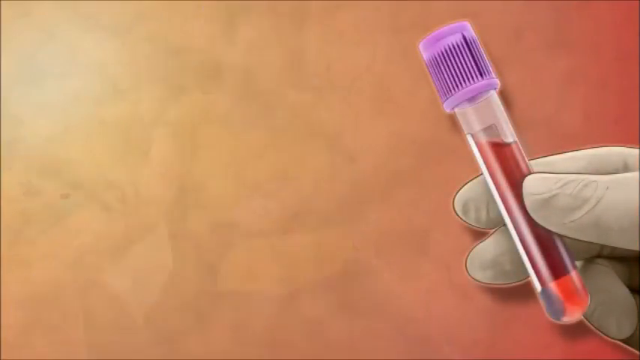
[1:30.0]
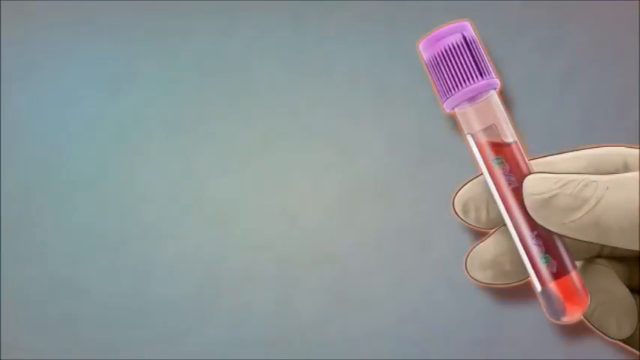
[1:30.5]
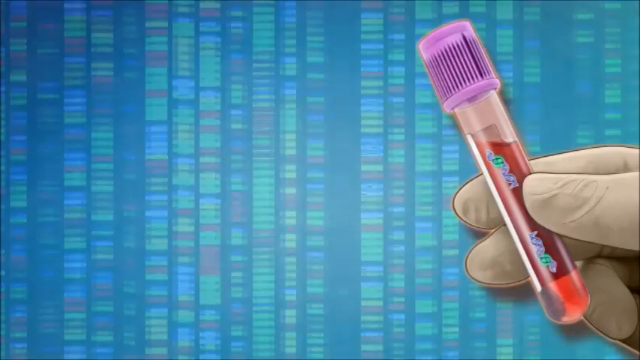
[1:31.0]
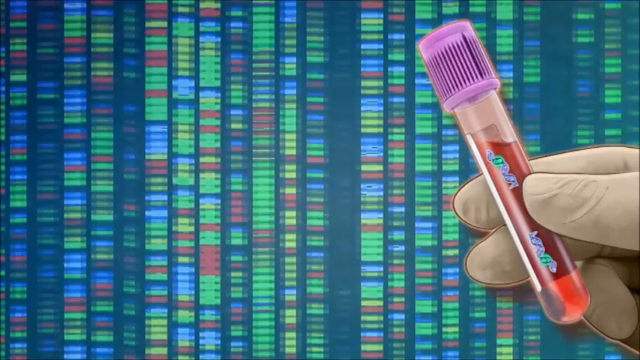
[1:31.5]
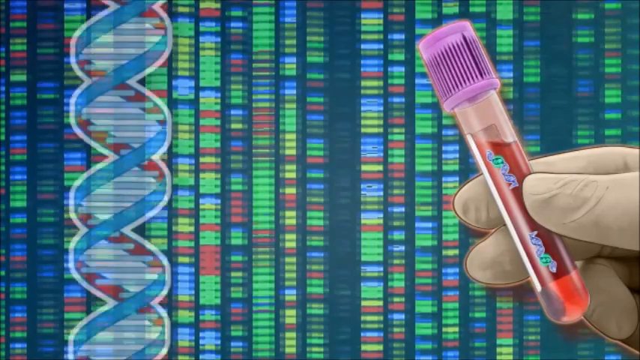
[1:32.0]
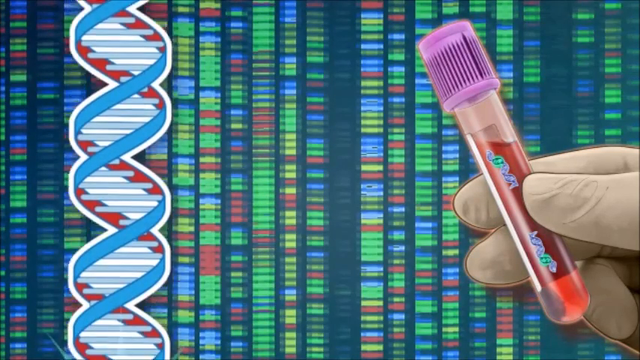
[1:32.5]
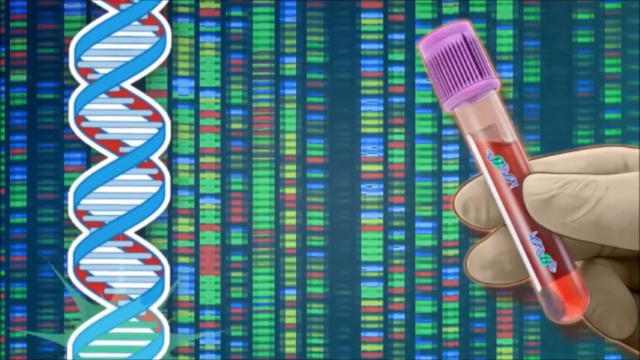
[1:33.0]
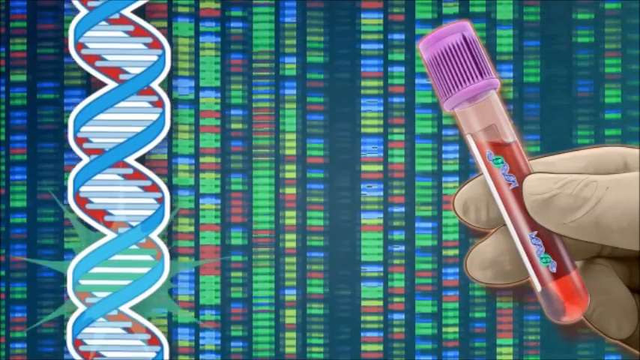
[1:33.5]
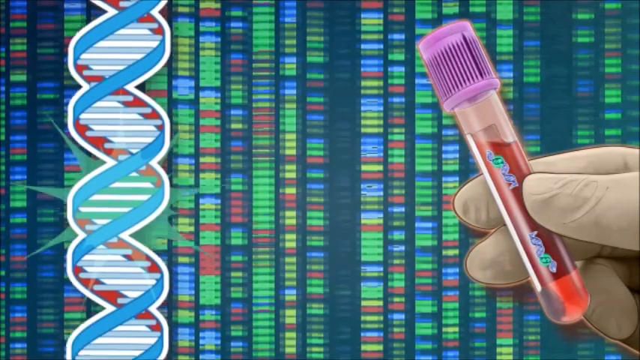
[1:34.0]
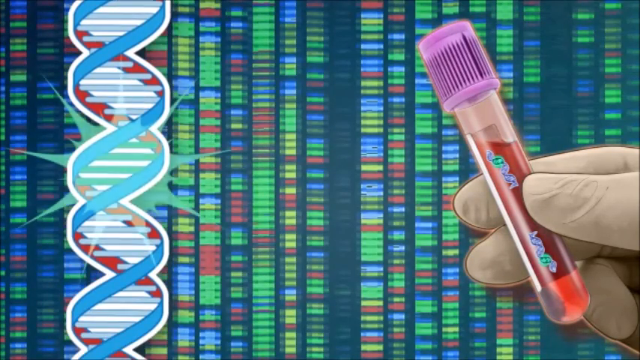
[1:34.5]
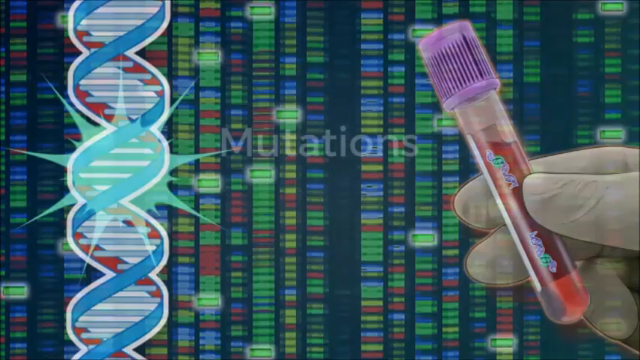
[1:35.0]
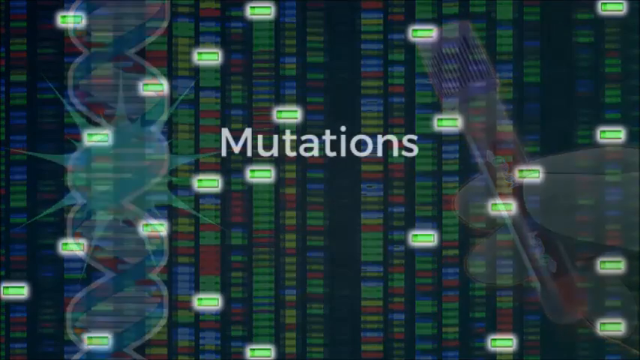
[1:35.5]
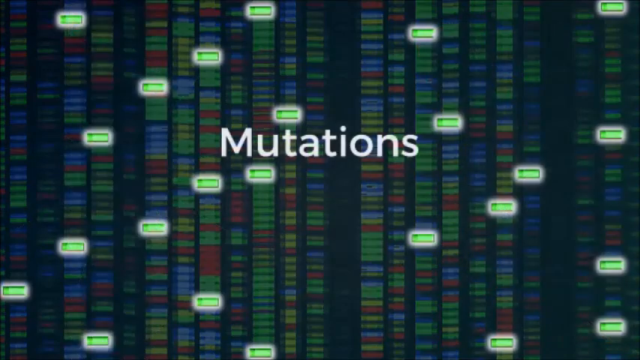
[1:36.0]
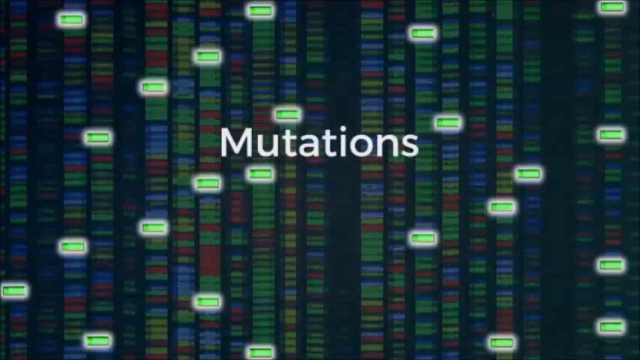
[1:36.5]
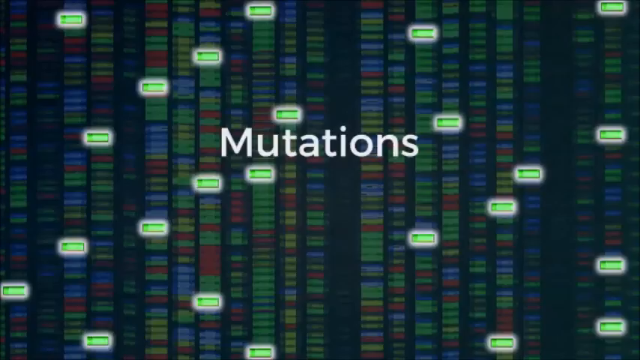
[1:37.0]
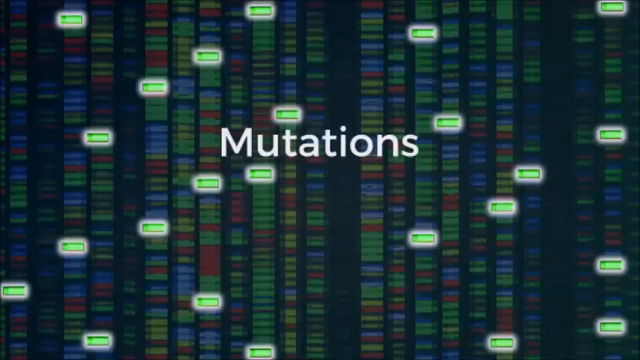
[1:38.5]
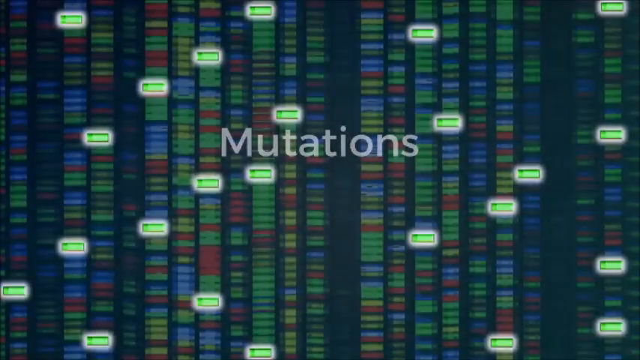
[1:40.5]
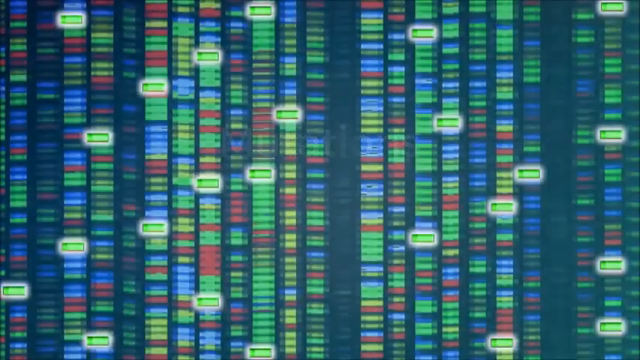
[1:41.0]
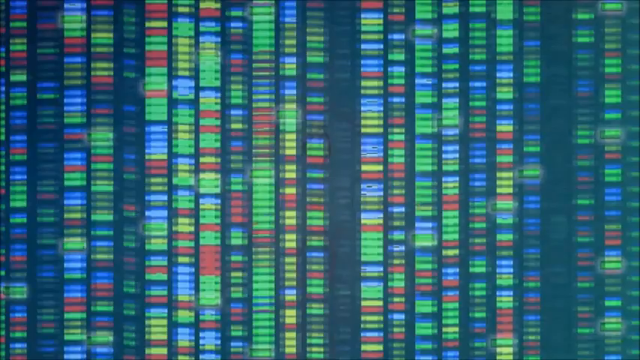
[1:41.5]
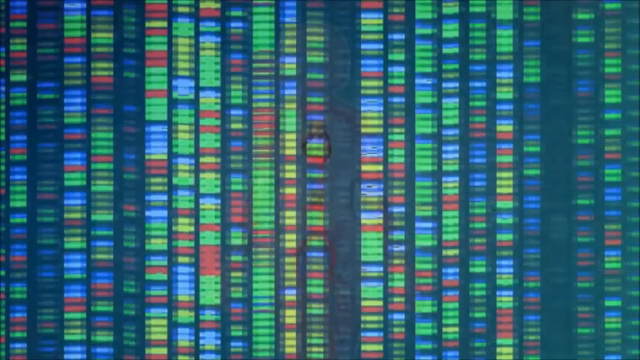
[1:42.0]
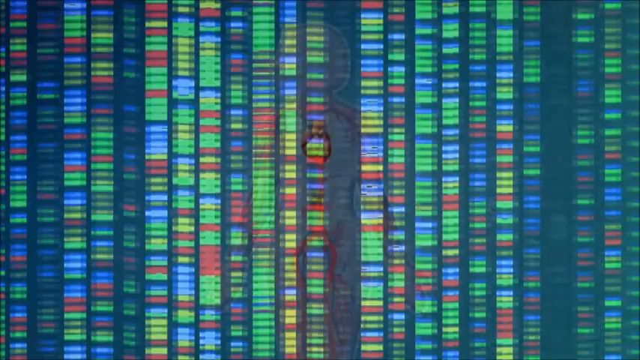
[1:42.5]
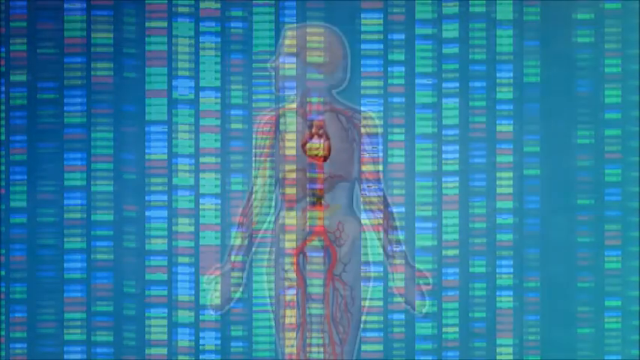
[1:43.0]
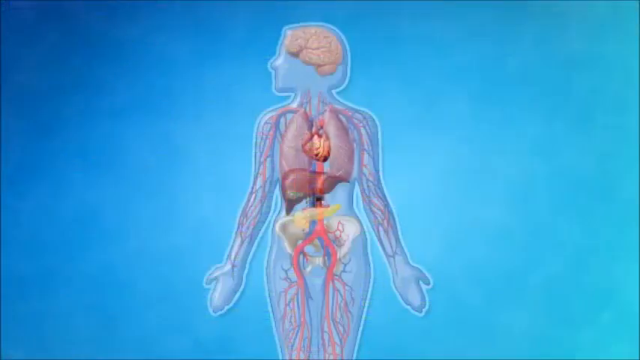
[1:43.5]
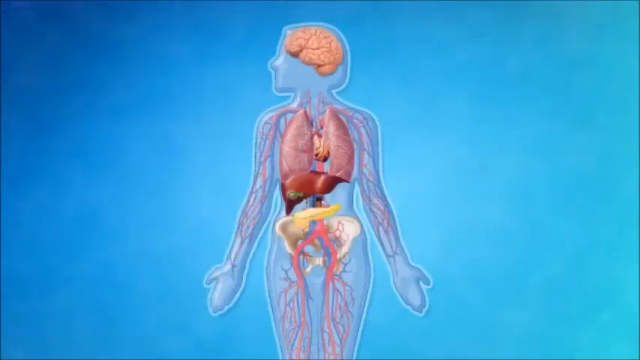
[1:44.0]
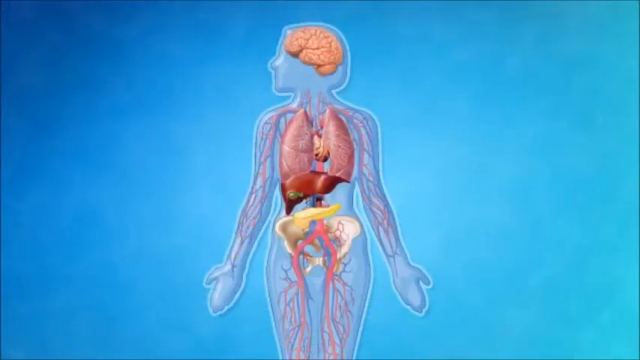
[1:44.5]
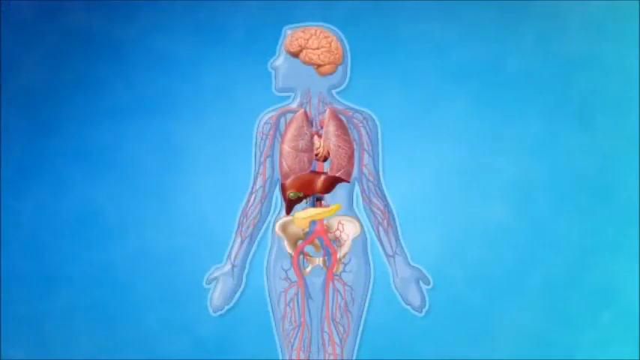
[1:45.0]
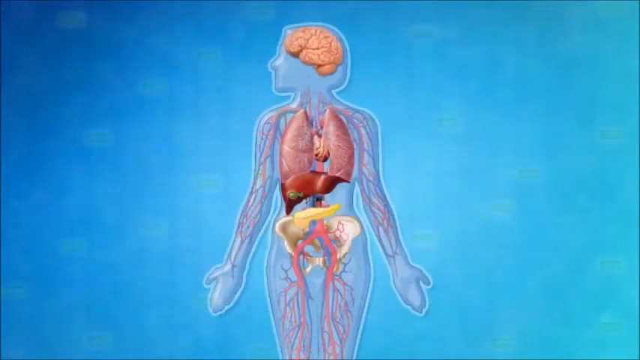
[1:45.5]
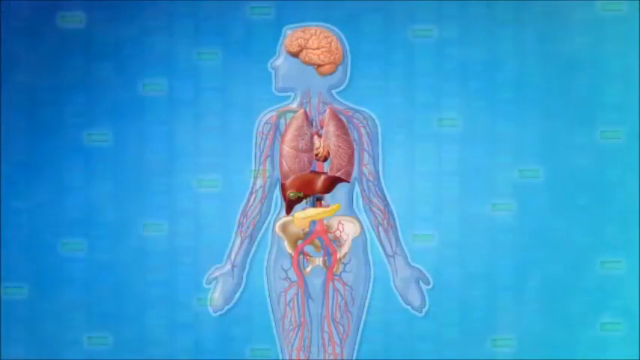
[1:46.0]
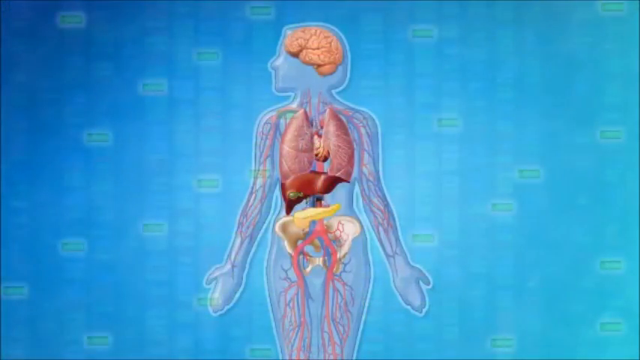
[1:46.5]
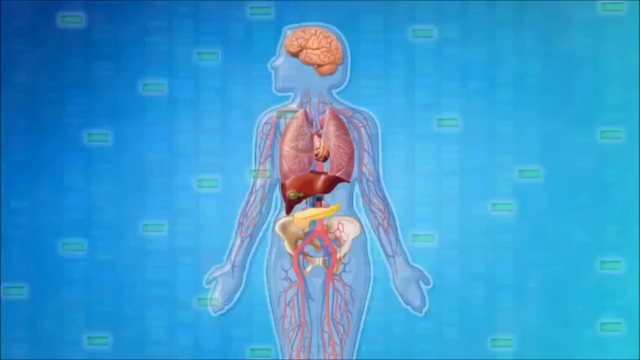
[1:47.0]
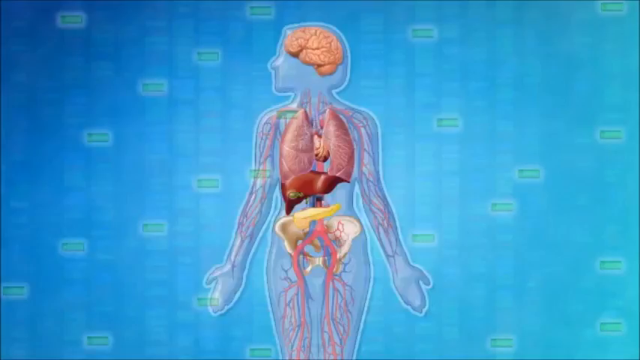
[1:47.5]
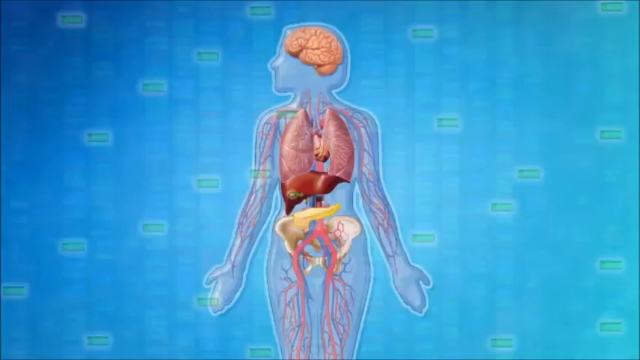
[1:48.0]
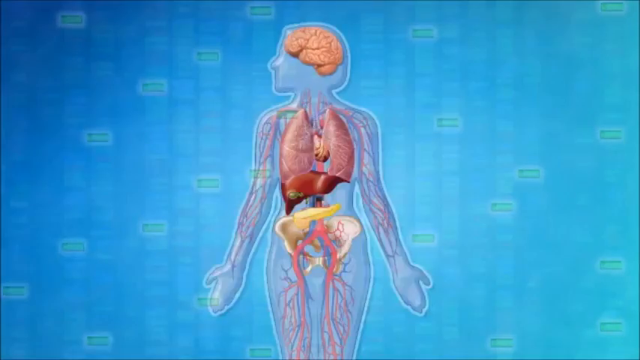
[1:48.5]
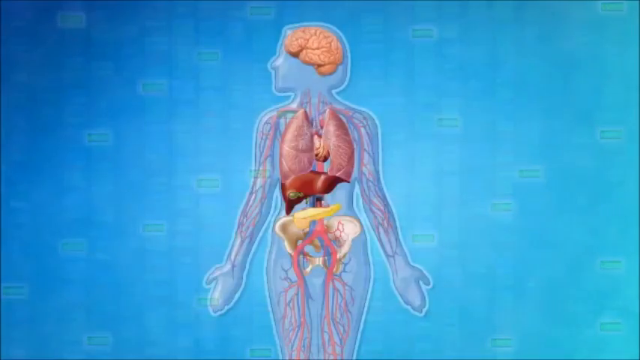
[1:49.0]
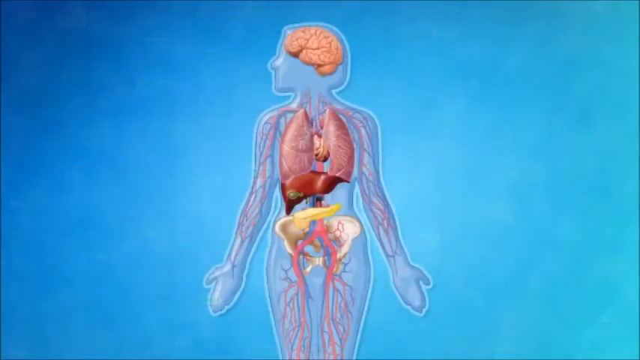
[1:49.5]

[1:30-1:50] The sequencing screen appears with its red, yellow, green, blue and black sequenced sections. A helix, like a DNA helix, appears over the top toward the left, enlarged. It is blue and red: the front is blue, the back side of the inside is red, and horizontal lines run through each of the loops of the helix. On the right side, the gloved fingers appear again: the top of the thumb and the index and middle fingers, holding a vial of blood. Inside the vial are the blue cells that were going through the cancer animation. The screen then transitions to the highlighted green sequenced screen with the word "MUTATIONS" centered across it. It then transitions back to the inside view of the female body, which now has vein and nerve systems attached to the organs, whereas before it showed only the organs.